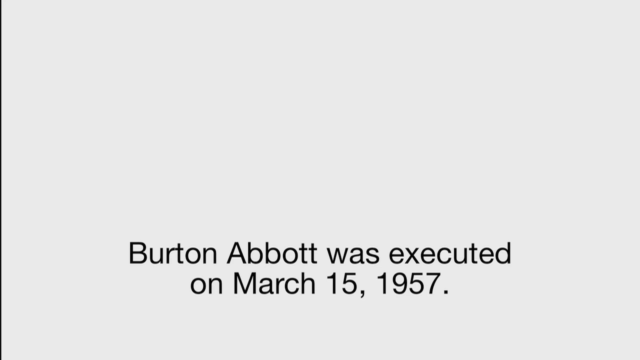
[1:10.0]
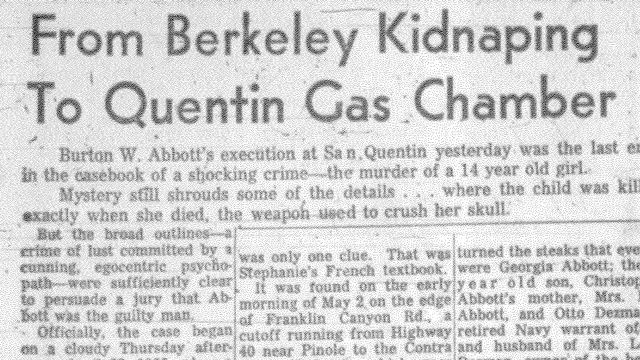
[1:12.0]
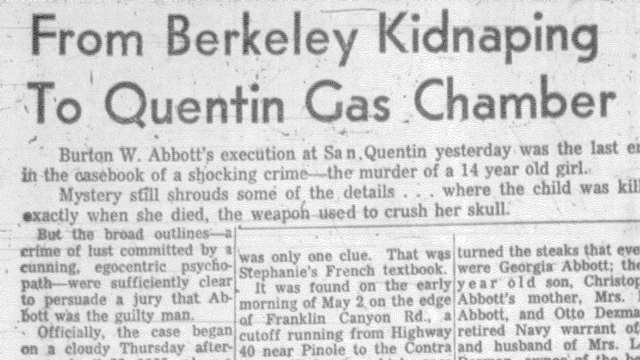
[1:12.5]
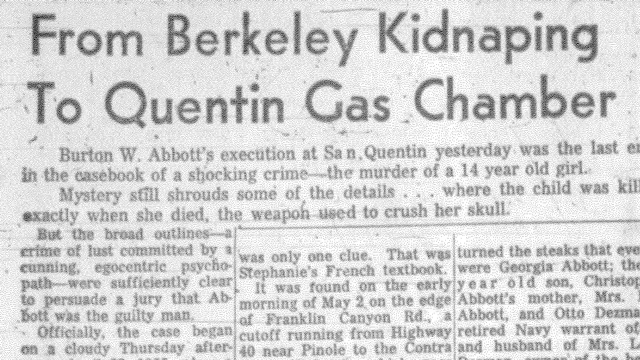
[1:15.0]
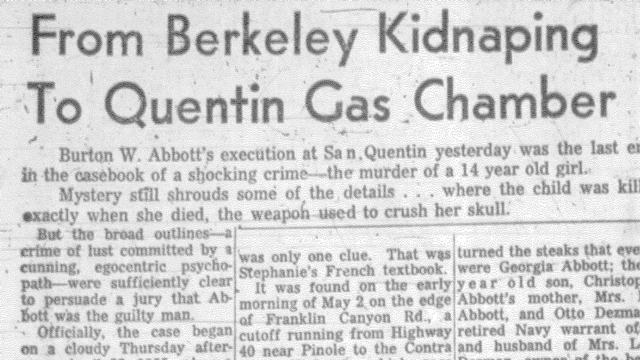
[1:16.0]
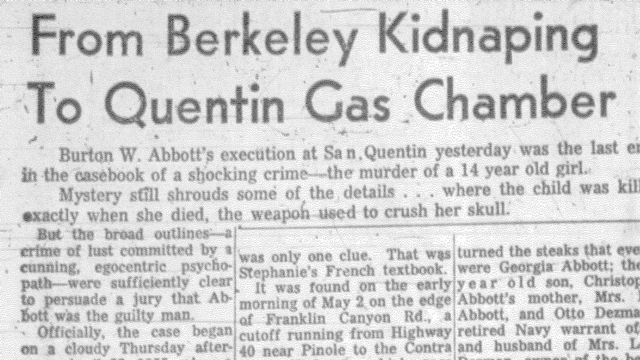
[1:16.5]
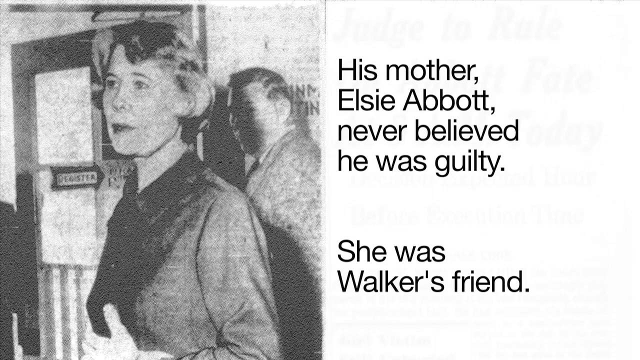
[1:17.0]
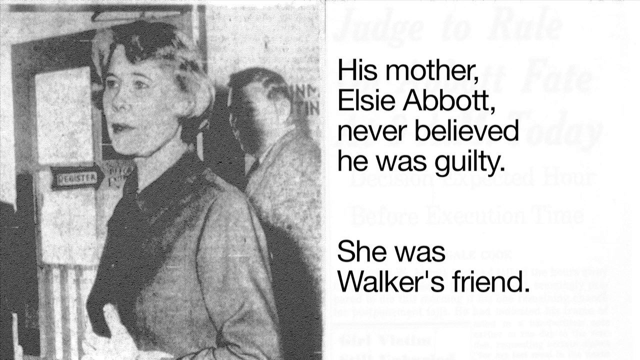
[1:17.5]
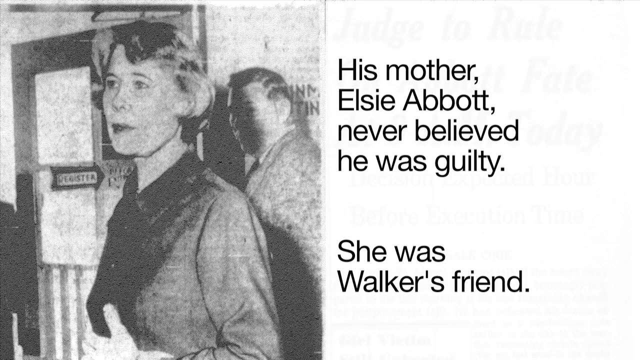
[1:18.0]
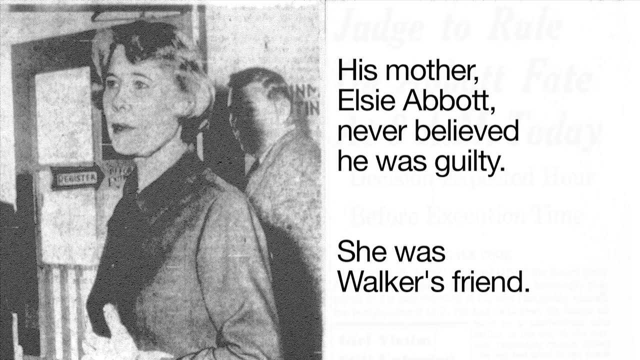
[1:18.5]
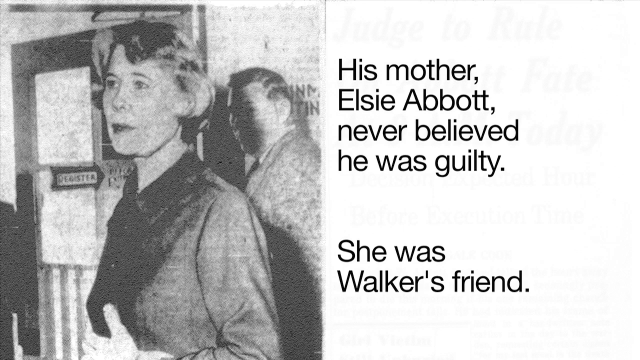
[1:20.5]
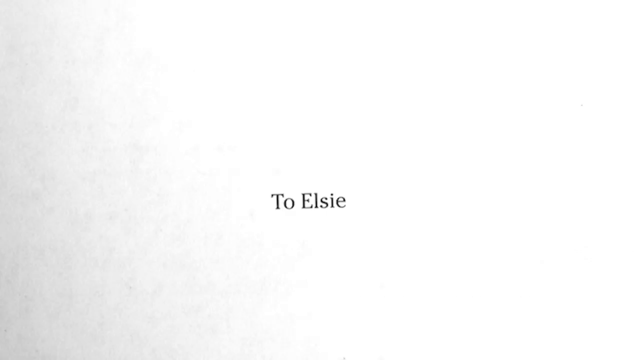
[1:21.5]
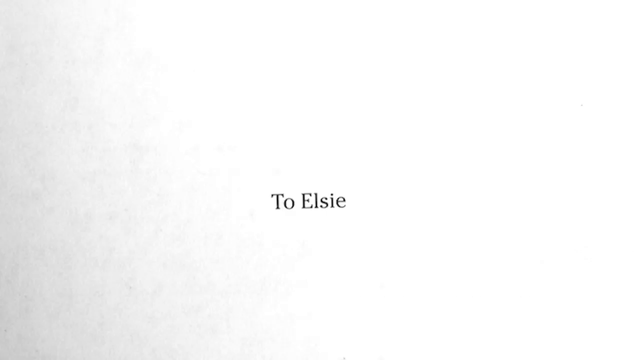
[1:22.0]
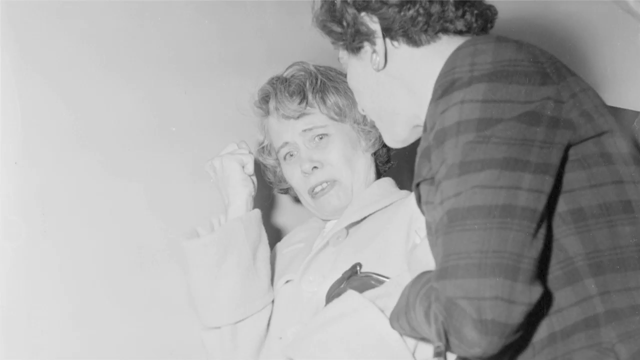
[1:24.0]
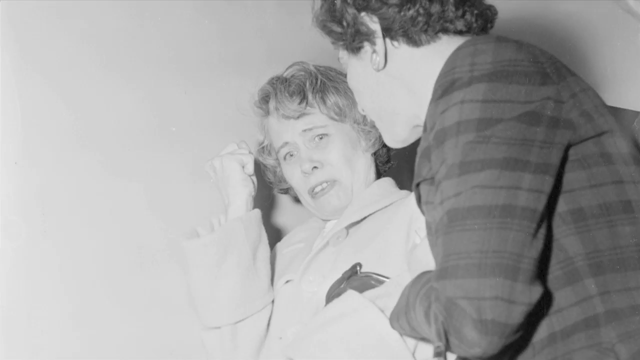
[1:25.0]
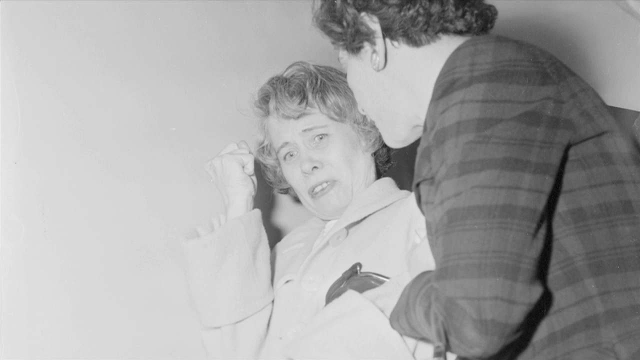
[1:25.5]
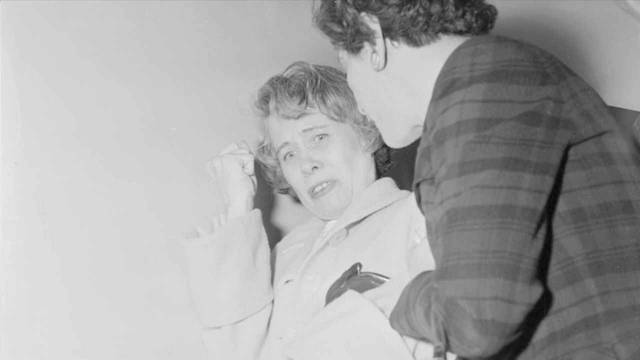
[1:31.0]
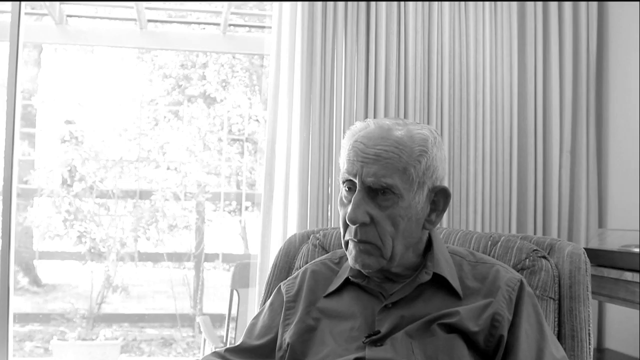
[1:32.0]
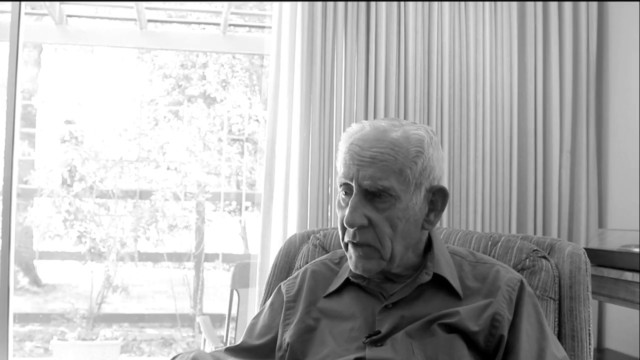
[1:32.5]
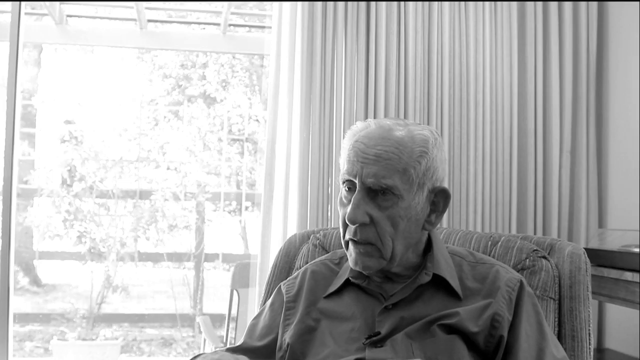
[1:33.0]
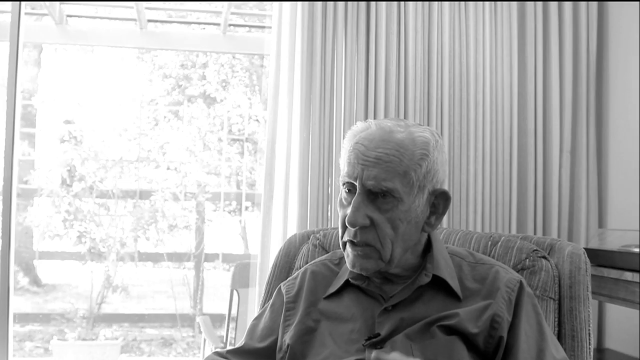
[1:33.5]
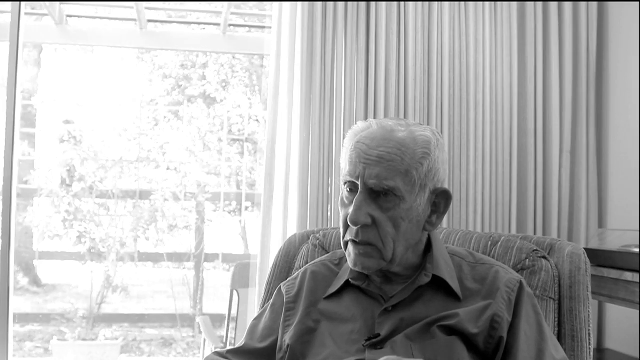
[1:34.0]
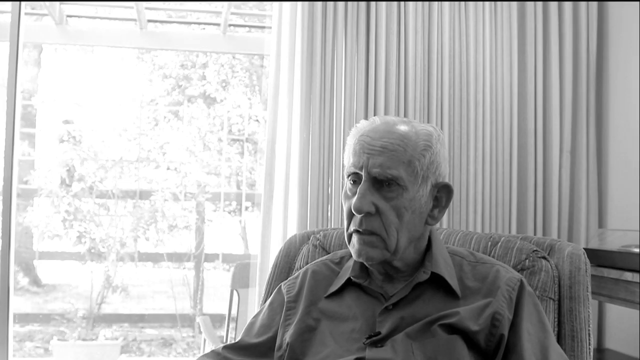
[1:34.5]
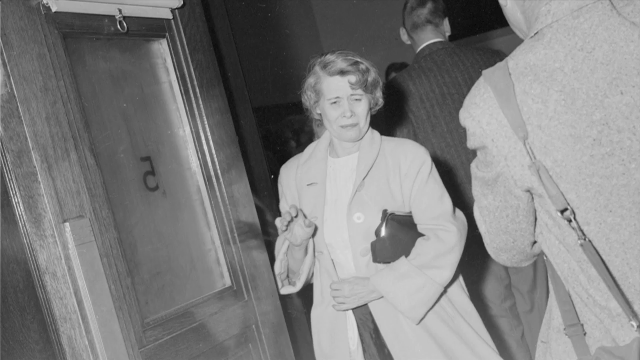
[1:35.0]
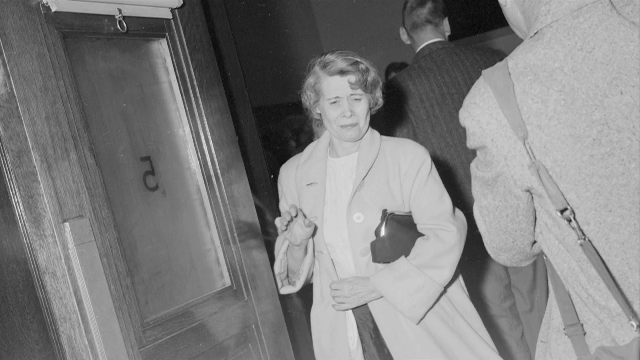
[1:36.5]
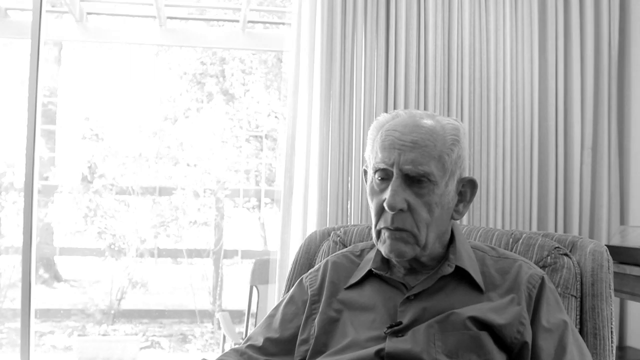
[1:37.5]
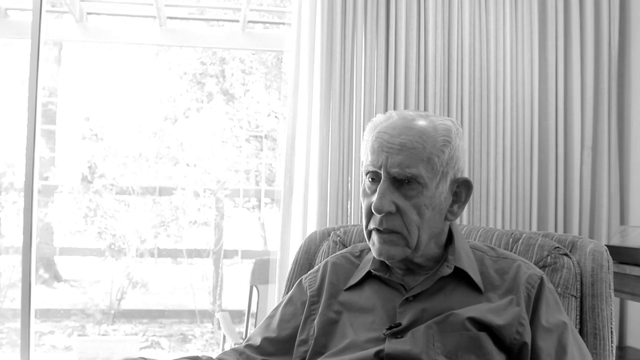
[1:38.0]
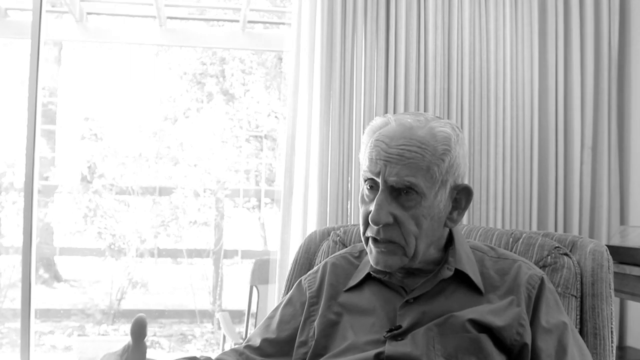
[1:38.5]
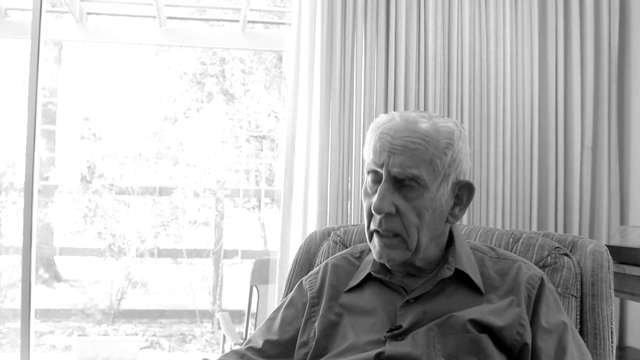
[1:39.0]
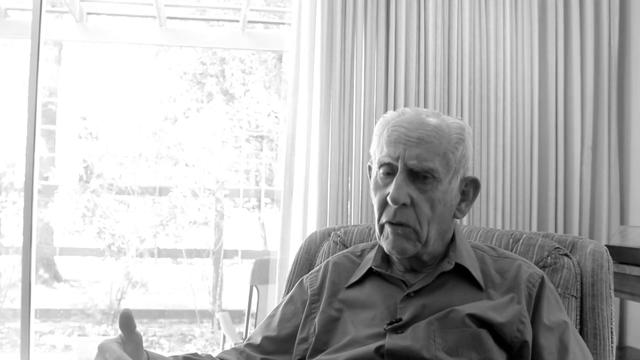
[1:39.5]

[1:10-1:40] A news clip follows about how a Berkeley kidnapping led to a San Quentin gas chamber. It states that Burton Abbott was executed yesterday for a shocking crime, the murder of a 14-year-old girl; that mystery still surrounds the case, since it is not known where the girl was when she died or what weapon was used to crush her skull; and that Abbott was driven by lust, was an egocentric psychopath, and the jury were content to convict him. It then states that Burton Abbott's mother, Elsie, never believed he was guilty, and that she was a friend of Walker, possibly the man in the video. A dedication to Elsie follows, showing her looking very upset after her son's execution. The view pans back to the old man talking, with his garden very sunny outside. Elsie is also seen leaving a building, on the verge of breaking into tears.